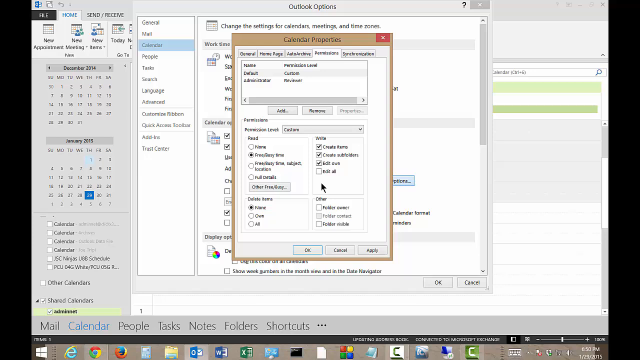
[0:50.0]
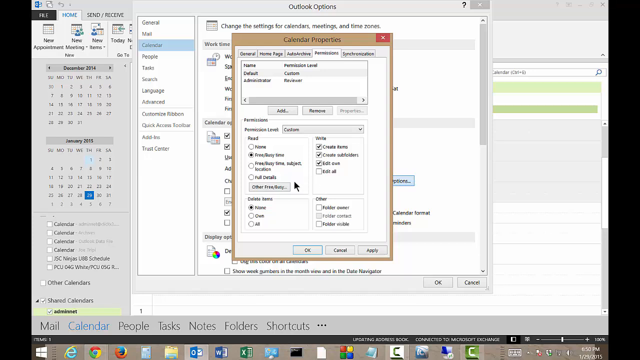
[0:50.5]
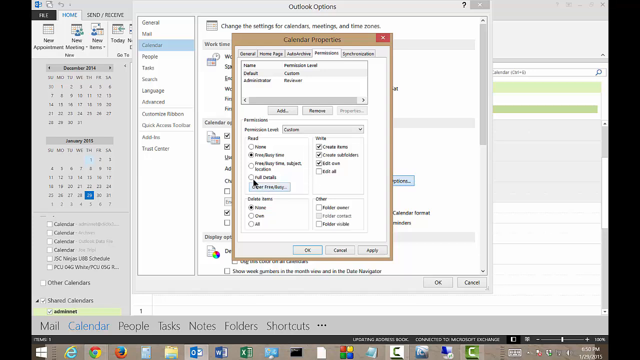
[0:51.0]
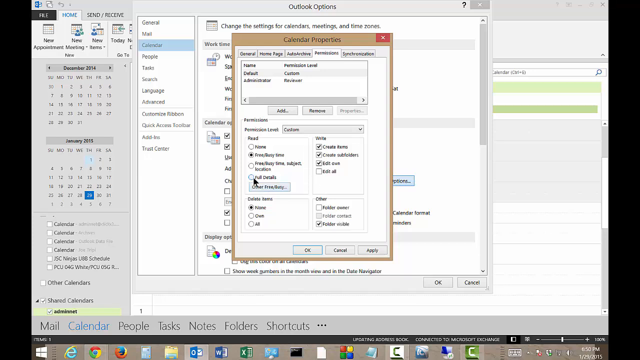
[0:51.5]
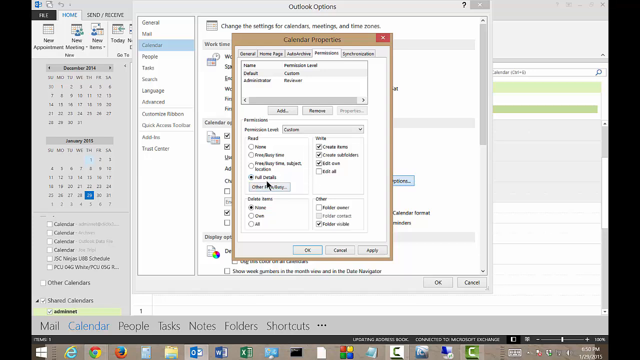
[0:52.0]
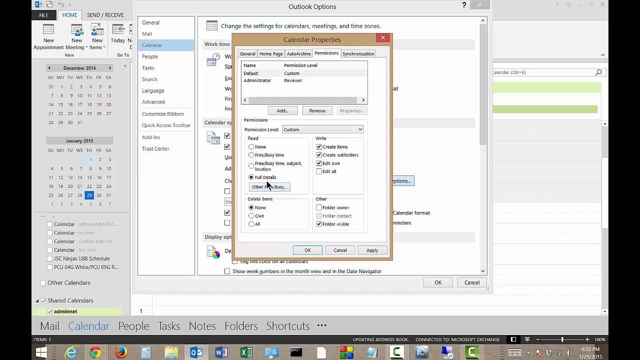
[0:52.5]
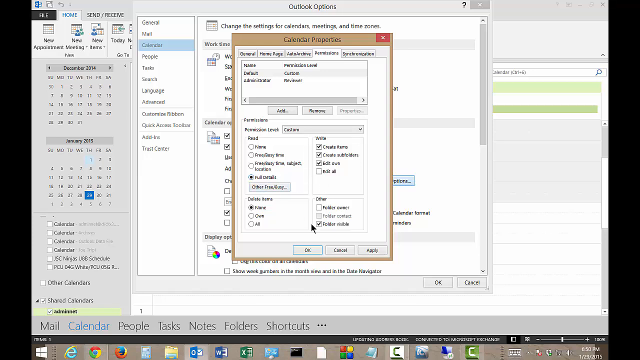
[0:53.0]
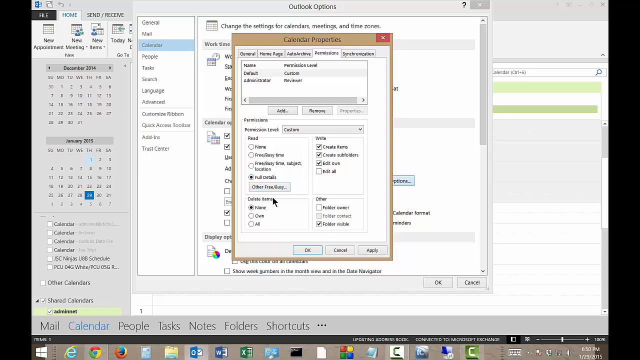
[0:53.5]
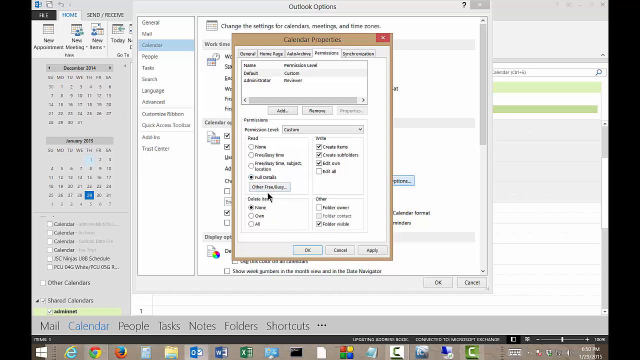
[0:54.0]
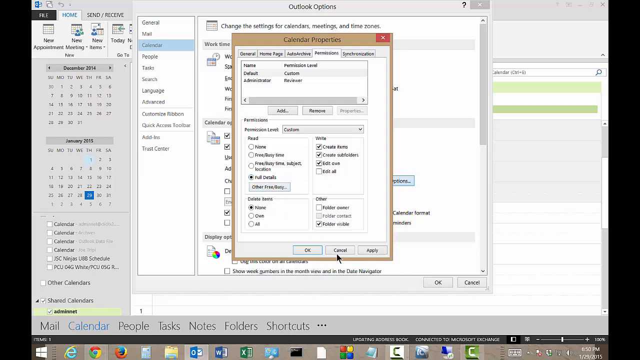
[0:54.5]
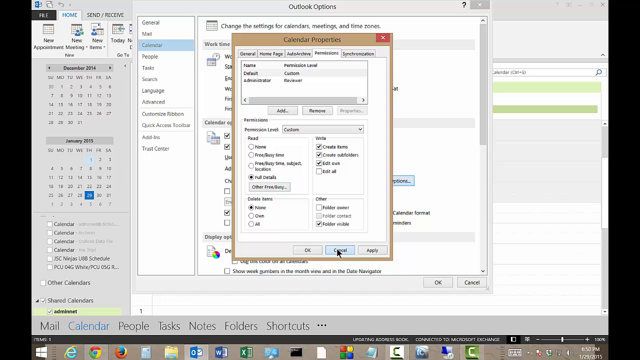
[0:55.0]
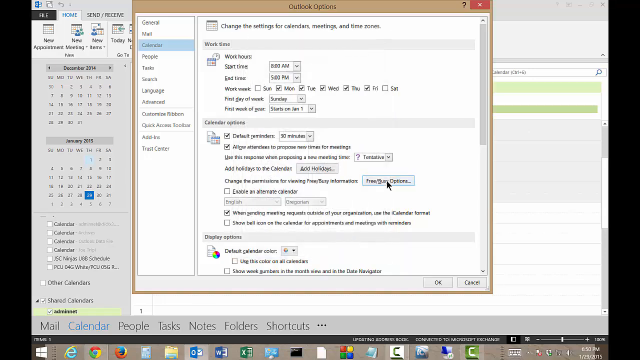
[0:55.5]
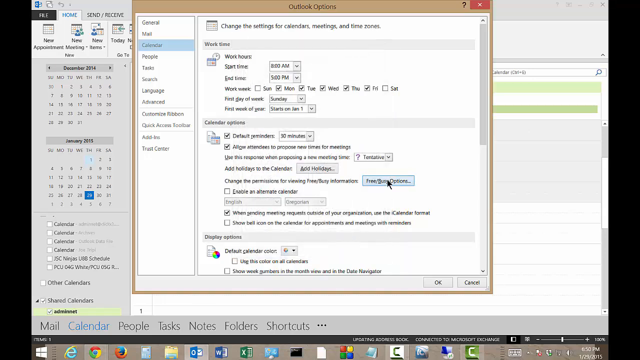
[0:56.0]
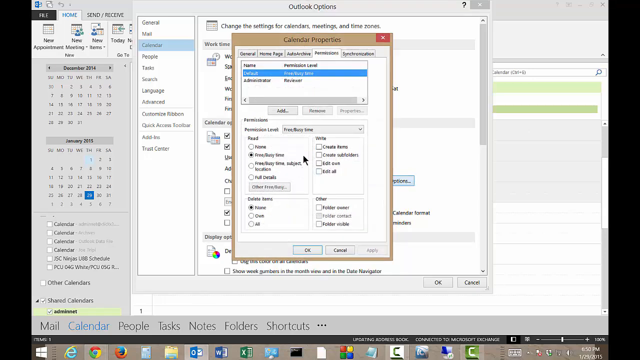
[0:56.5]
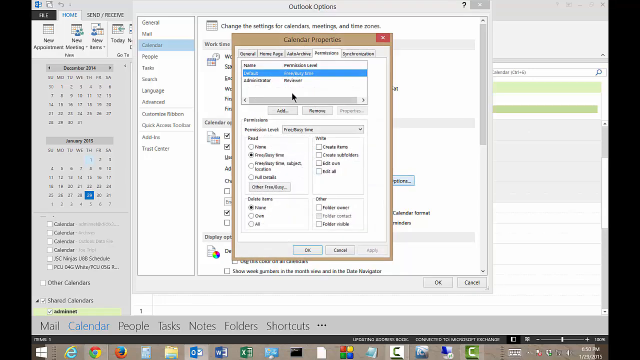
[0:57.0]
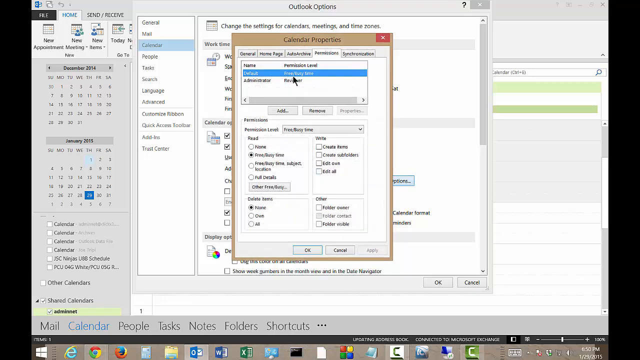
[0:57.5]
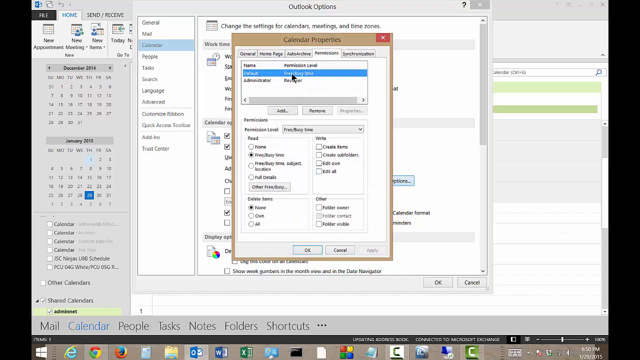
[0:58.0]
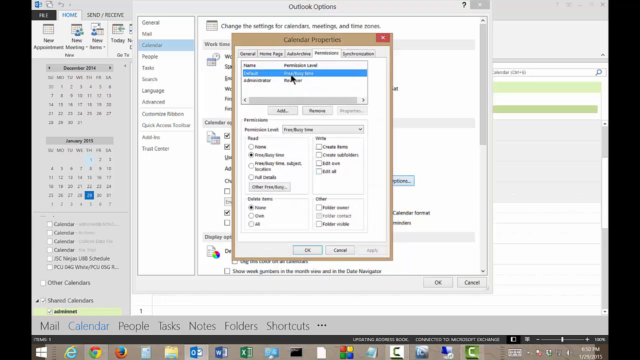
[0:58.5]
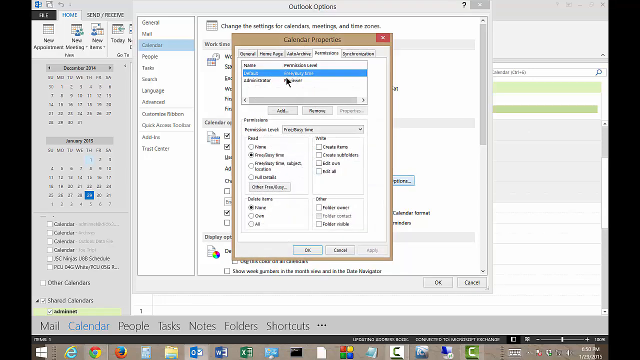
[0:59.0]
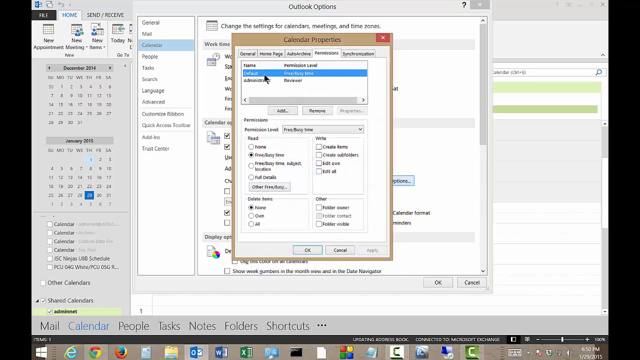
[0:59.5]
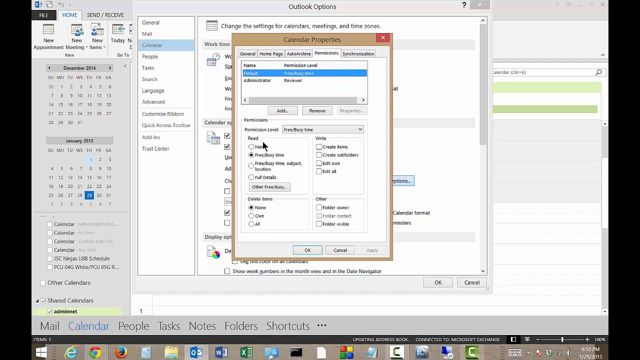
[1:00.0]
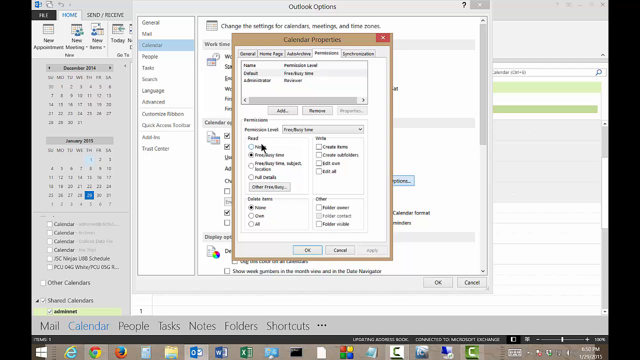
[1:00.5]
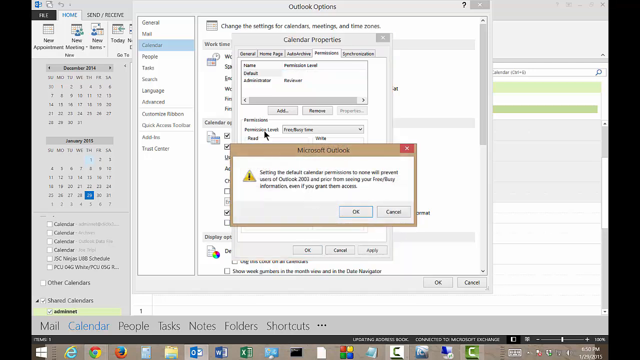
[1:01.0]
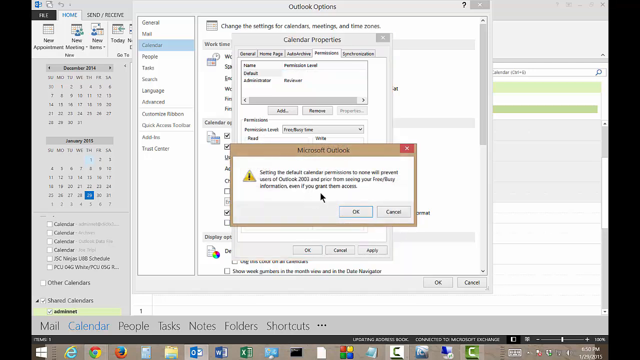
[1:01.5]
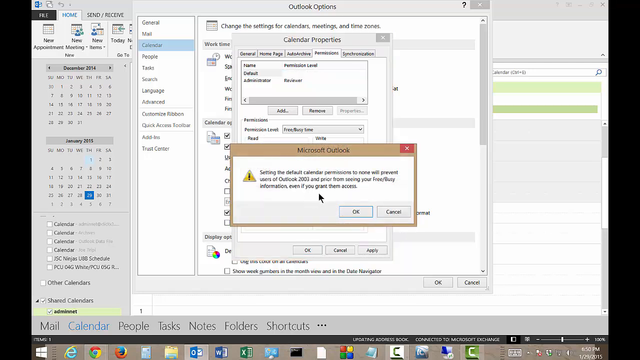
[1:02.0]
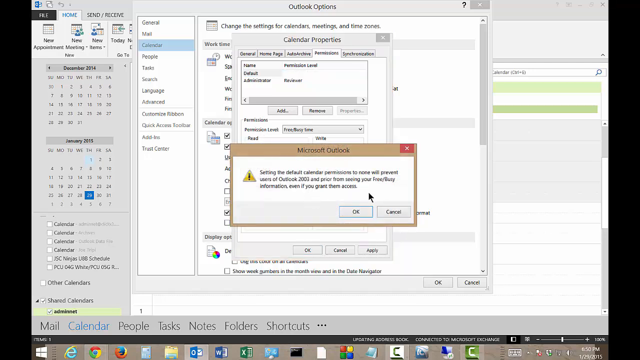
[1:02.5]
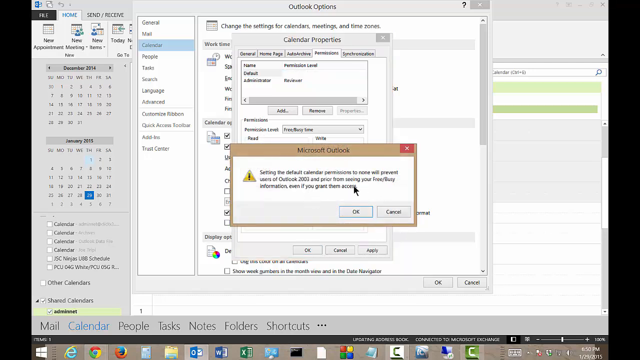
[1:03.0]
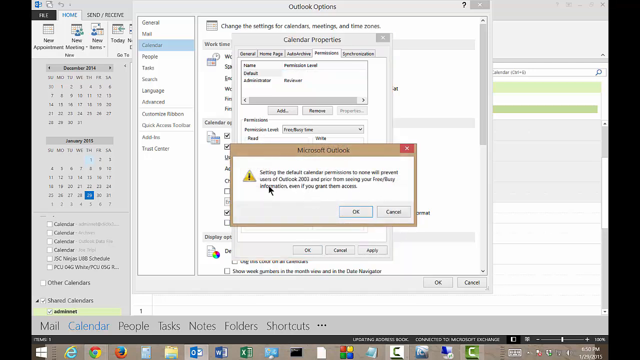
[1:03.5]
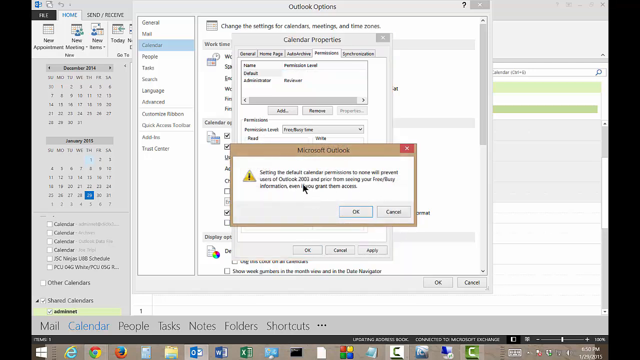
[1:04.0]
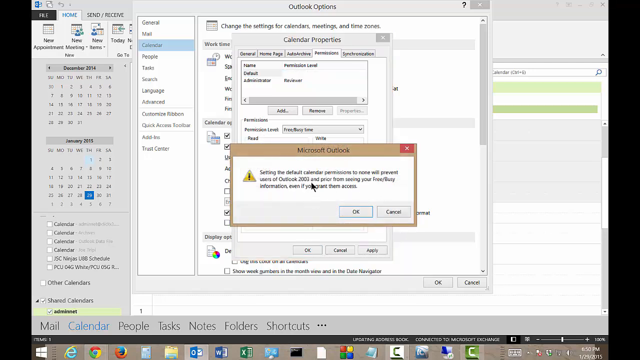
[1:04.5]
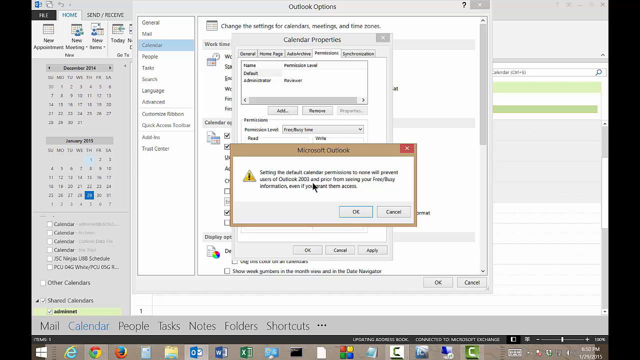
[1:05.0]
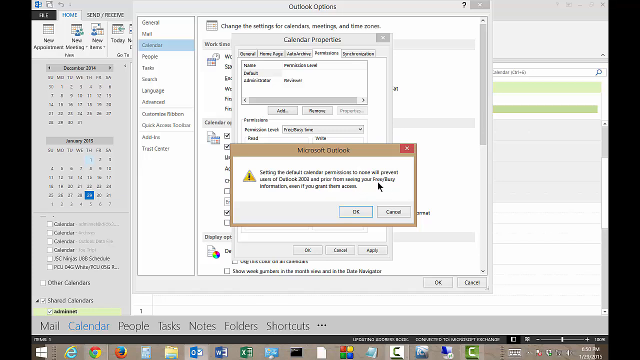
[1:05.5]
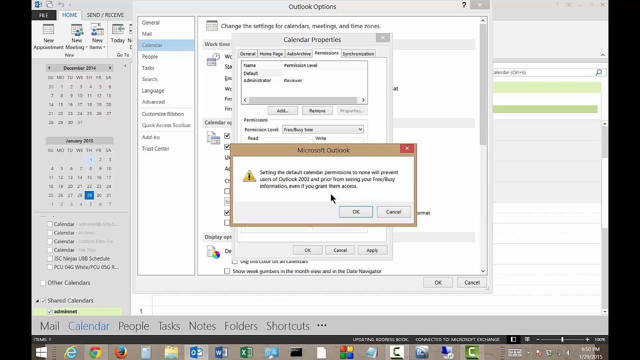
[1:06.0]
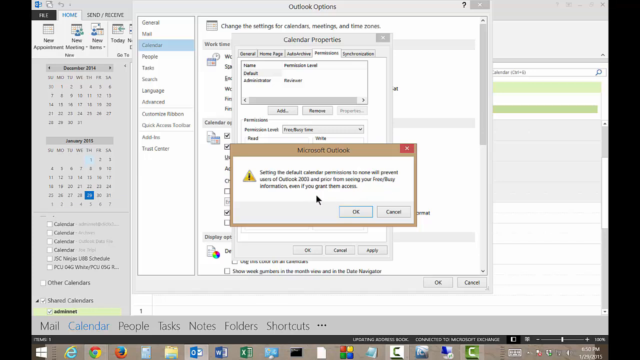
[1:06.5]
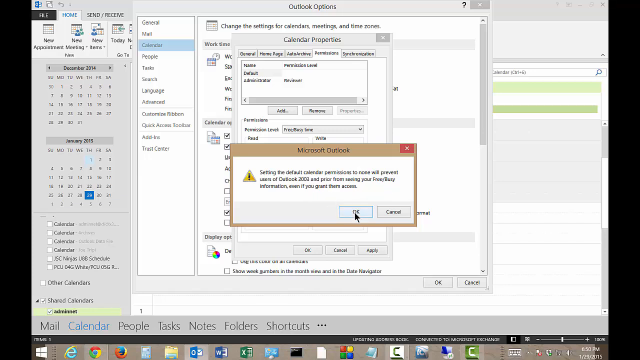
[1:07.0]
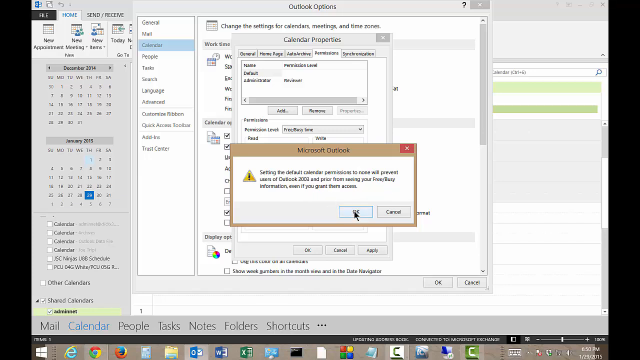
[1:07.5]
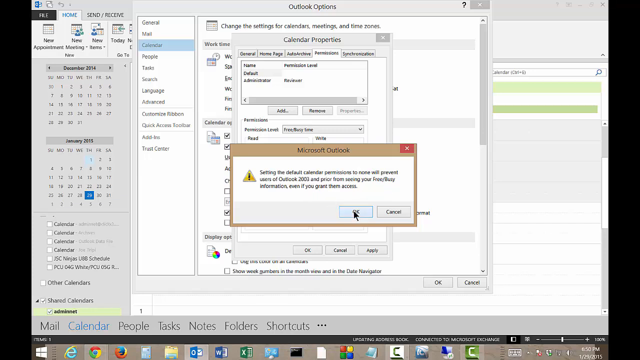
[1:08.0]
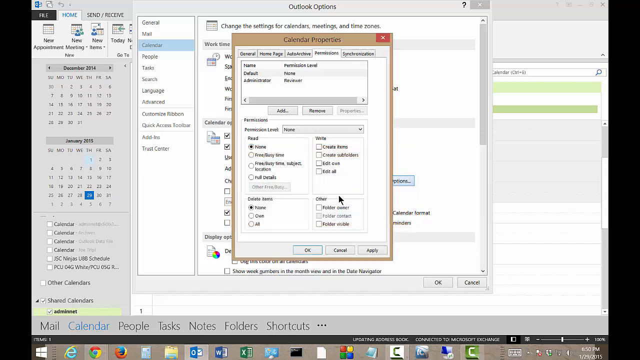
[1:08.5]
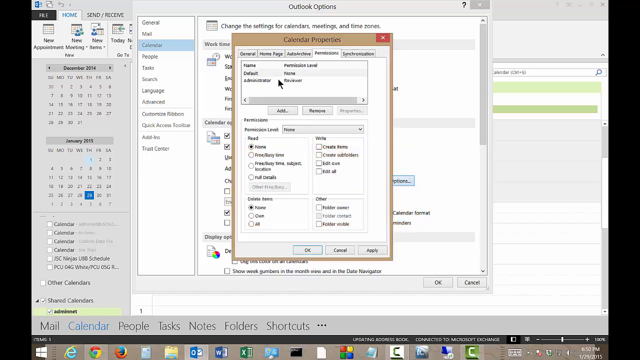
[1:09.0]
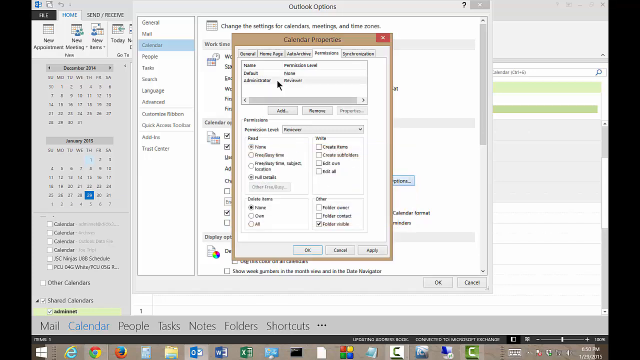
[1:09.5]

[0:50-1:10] The user selects buttons under the "Right" subtitle within the Calendar Properties window, which is above the Outlook Options window, both on top of the larger Outlook Calendar application. The cursor then moves toward the "Read" subtitle, which has a range of options underneath, selectable with bullet point markers. The user clicks on the words "full details", and its bullet point fills in. The user then selects cancel at the bottom, moves up to the read panel again, tries to select one of the options, and receives an error message from Microsoft Outlook reading "setting the default calendar permissions to none will prevent users of Outlook 2003 and prior from viewing your information, even if you give them access." The user hovers over the writing on the error message and presses OK.